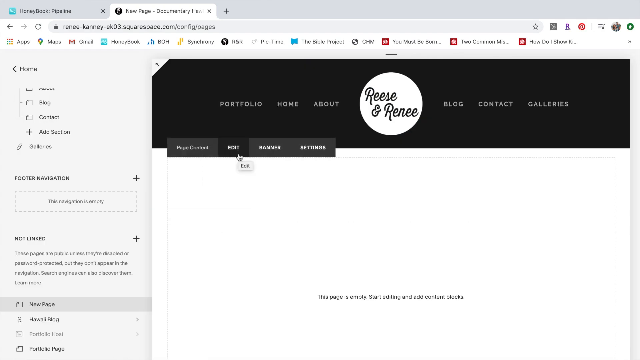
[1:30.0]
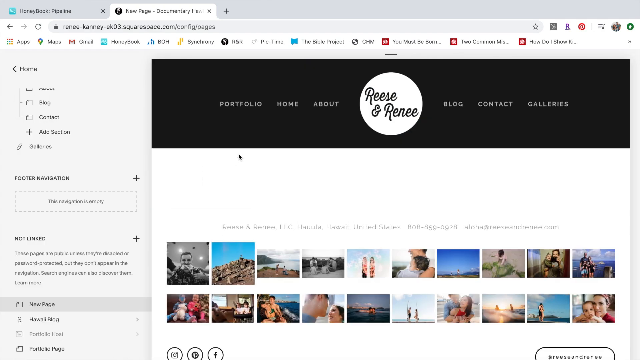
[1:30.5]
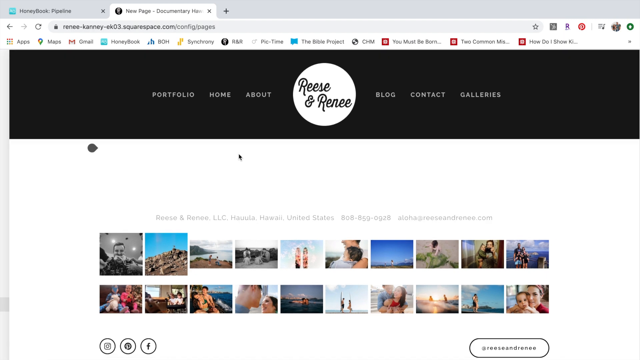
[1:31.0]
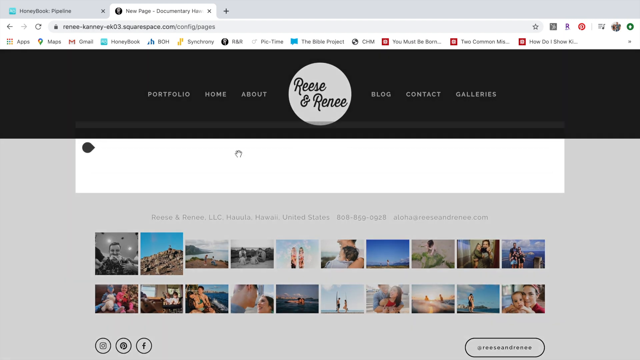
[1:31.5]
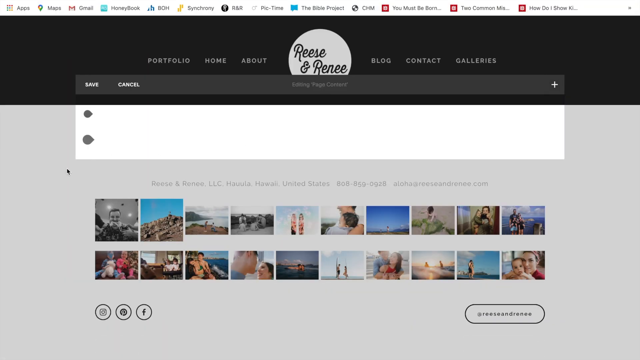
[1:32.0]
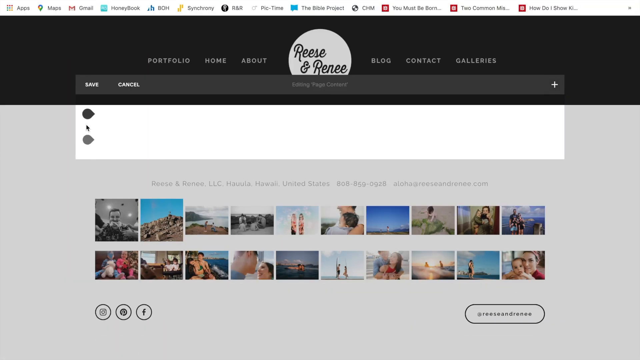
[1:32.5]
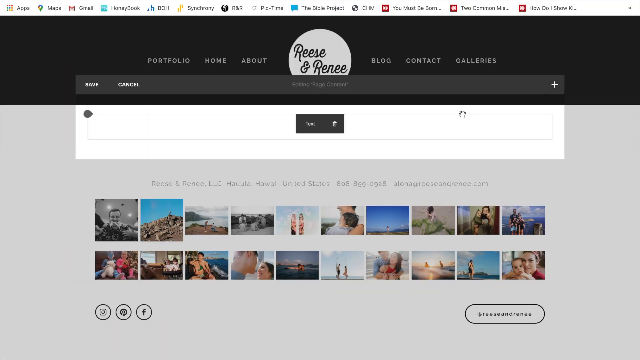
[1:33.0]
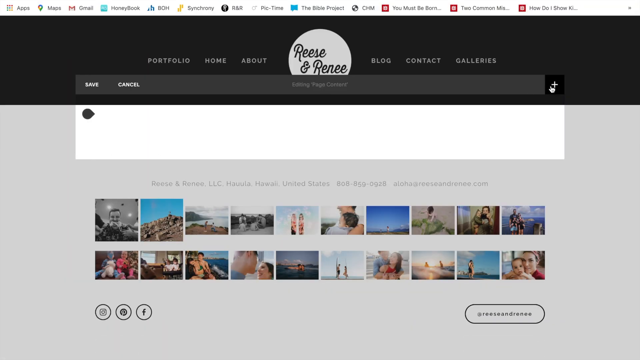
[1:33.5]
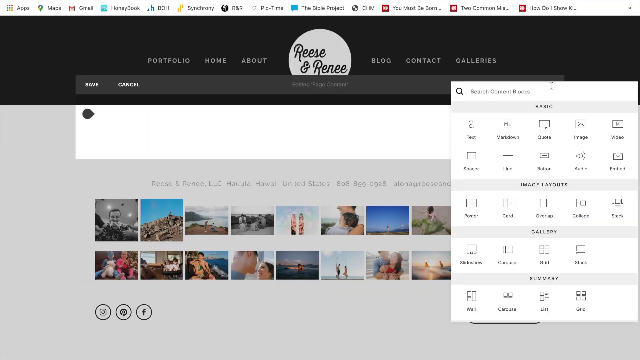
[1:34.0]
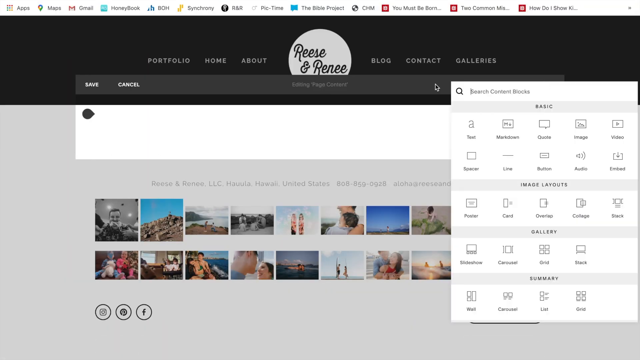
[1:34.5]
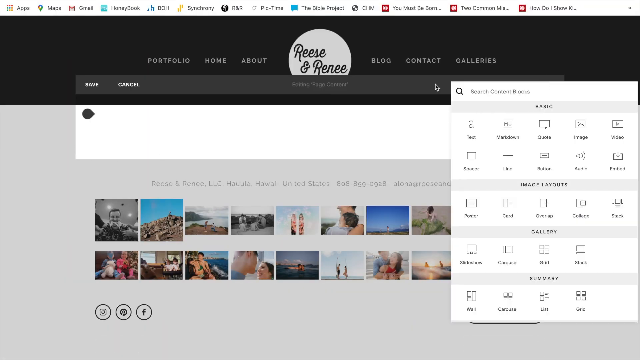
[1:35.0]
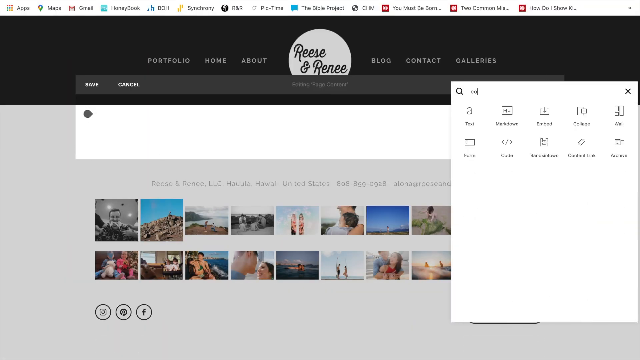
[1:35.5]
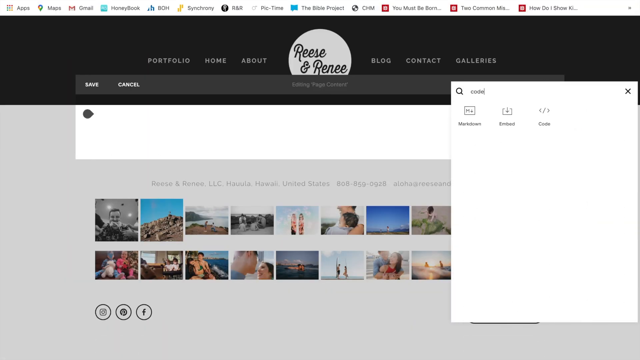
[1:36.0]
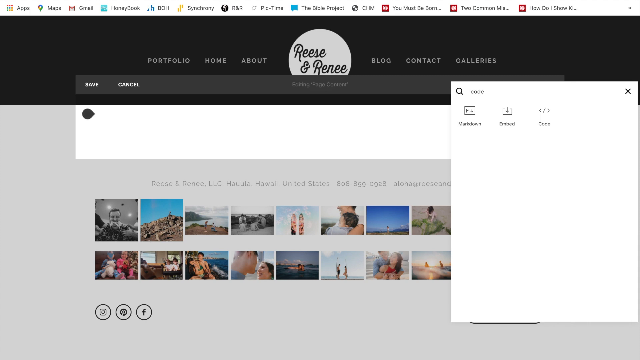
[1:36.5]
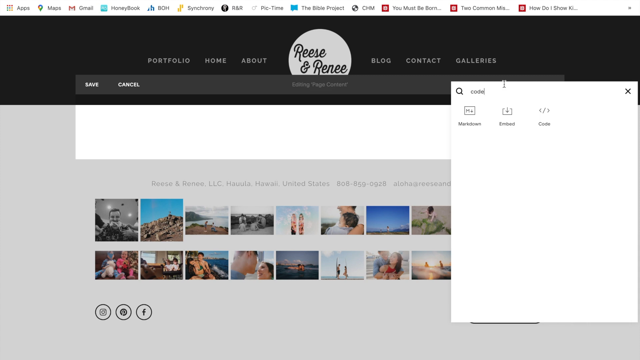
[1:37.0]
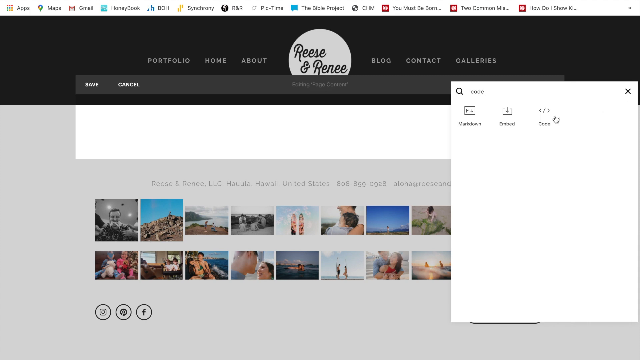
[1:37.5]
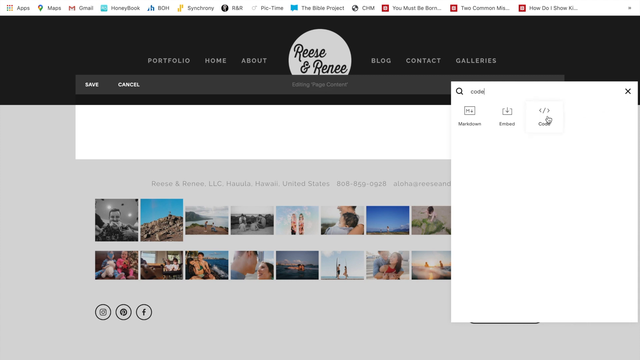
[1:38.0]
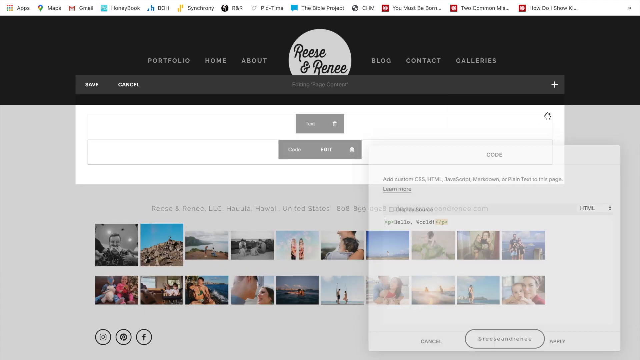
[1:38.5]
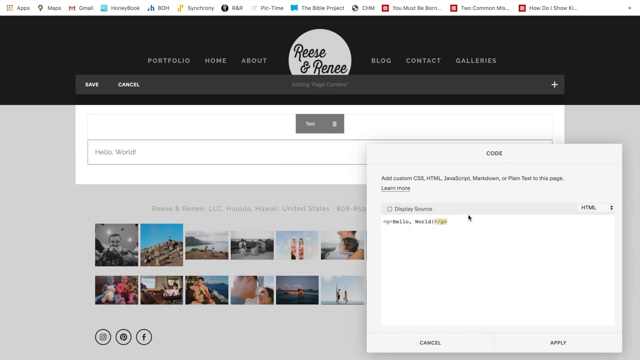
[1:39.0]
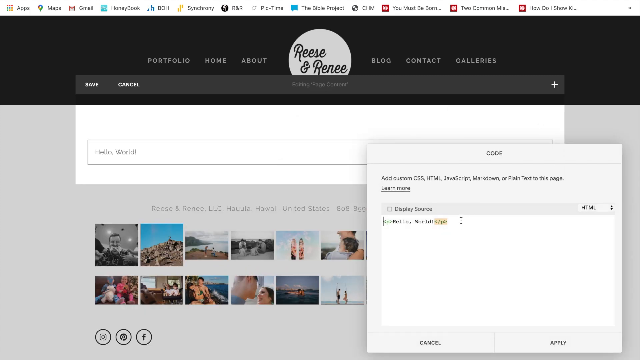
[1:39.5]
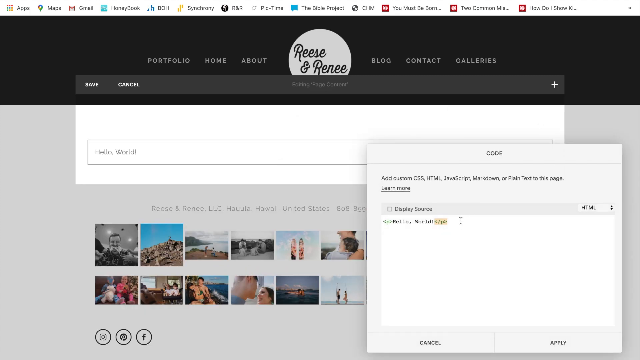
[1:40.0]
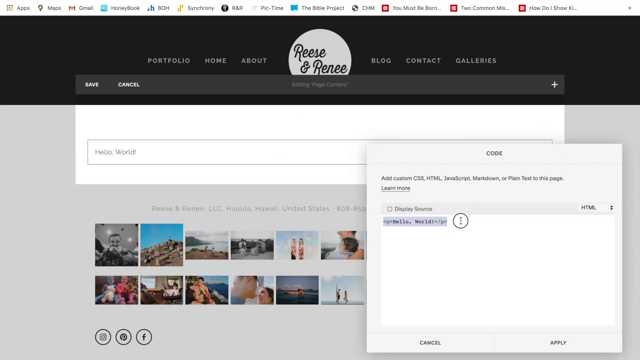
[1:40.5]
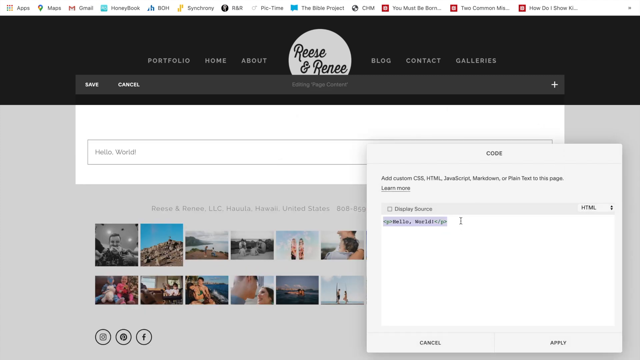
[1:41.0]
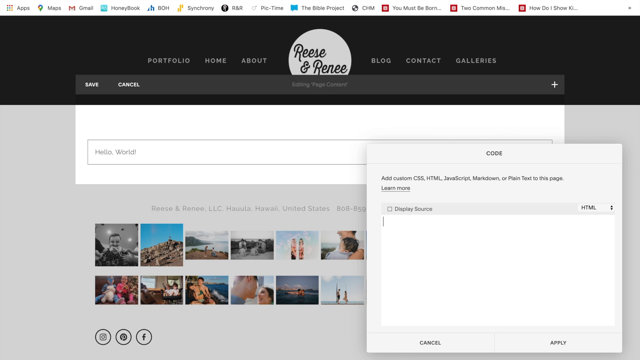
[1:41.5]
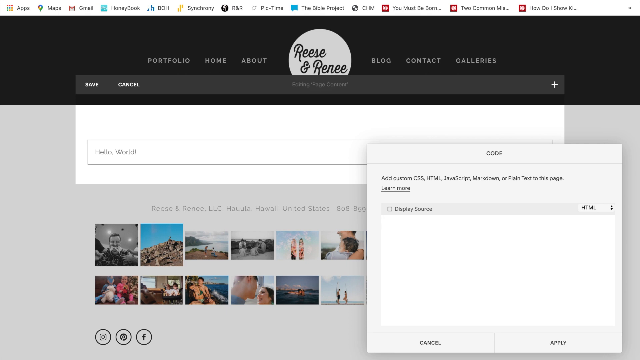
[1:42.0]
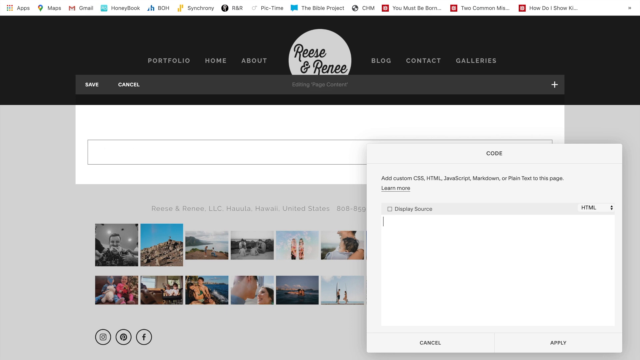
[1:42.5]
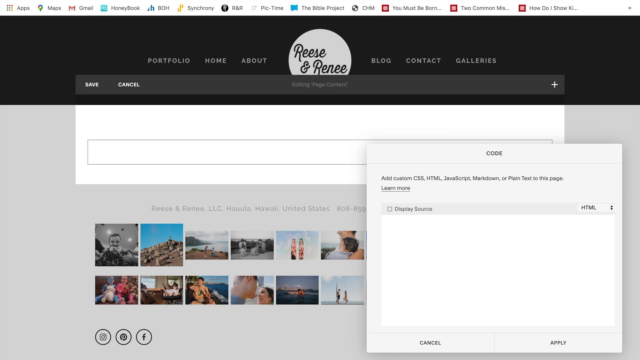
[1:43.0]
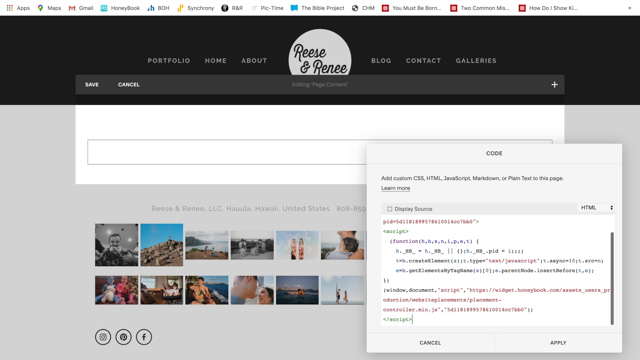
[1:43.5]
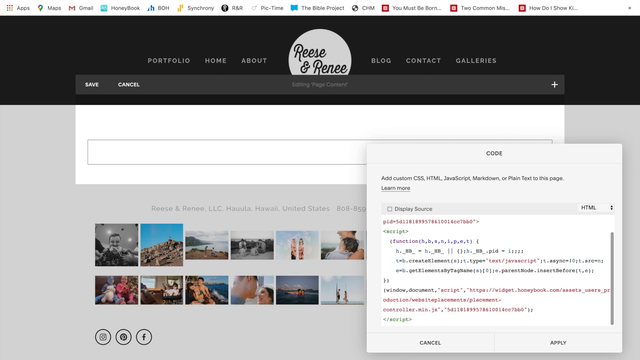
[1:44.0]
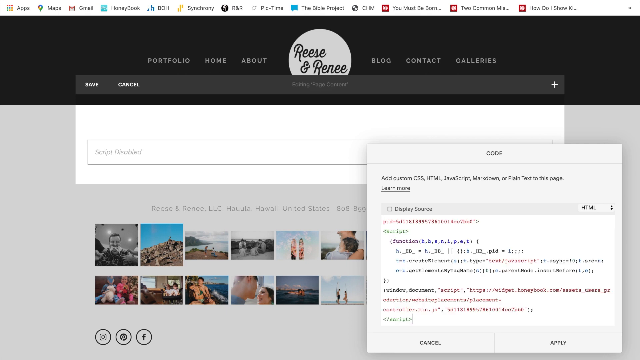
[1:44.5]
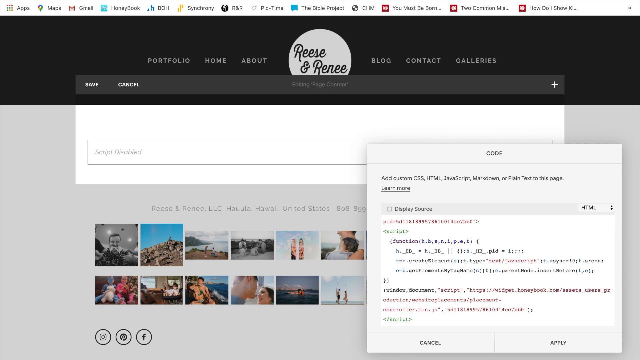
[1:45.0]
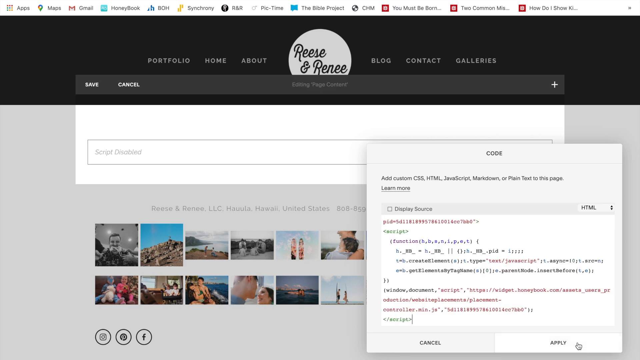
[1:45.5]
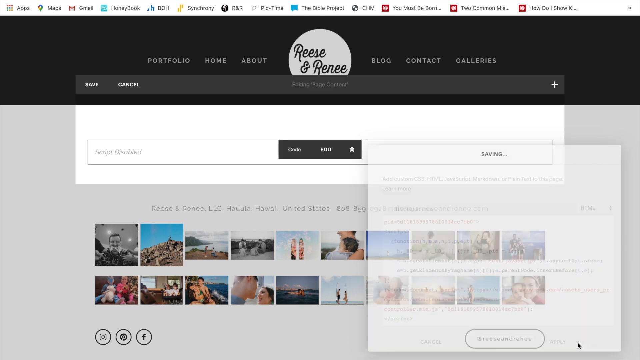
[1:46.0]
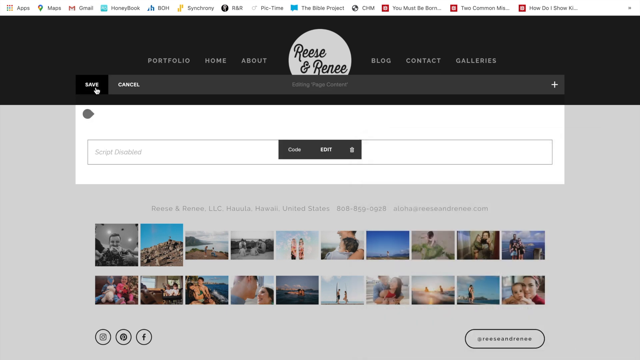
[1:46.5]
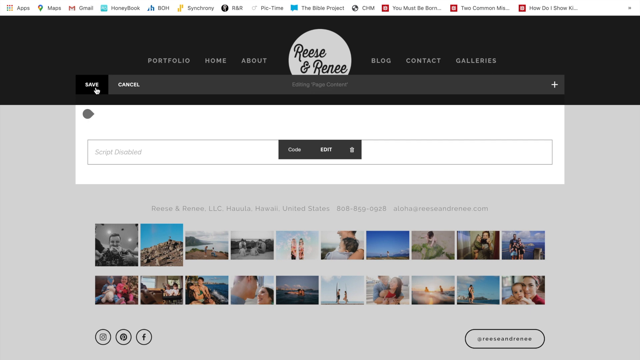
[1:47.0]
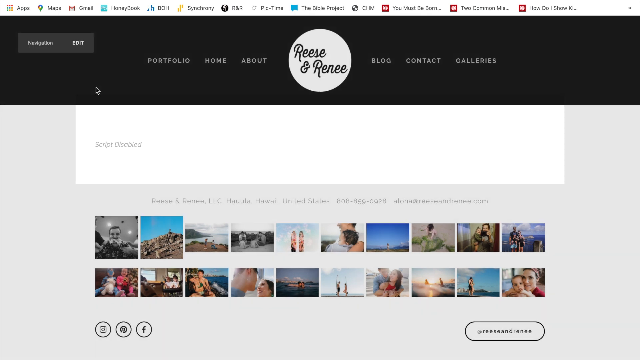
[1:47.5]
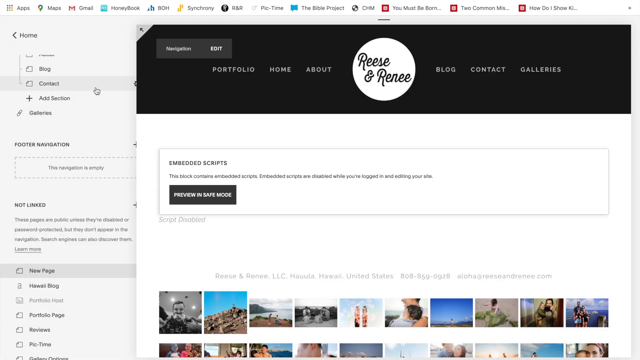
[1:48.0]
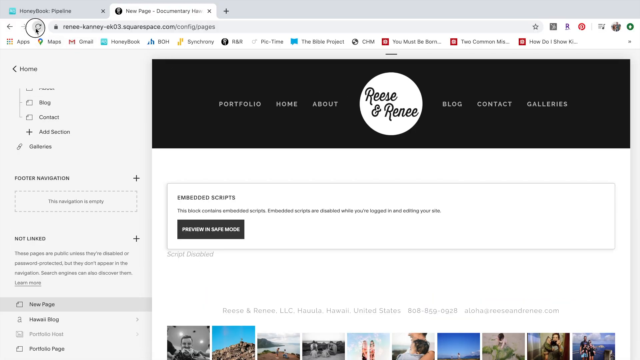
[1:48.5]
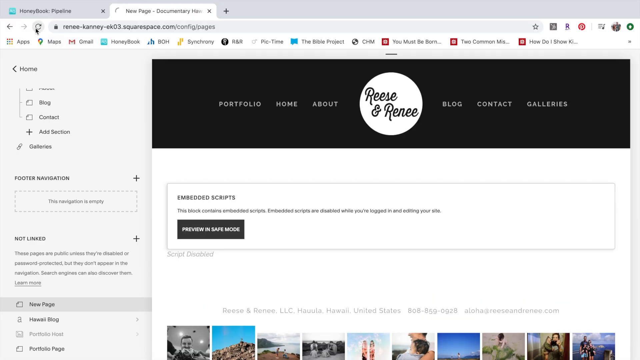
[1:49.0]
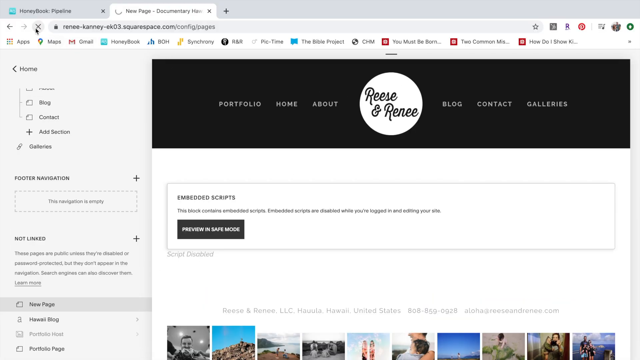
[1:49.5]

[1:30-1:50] An internet browser is open with two tabs, and the second tab is displayed: a Squarespace web page in development. The user is on a new page and selects an option to edit the page contents, which produces an empty horizontal white box. Using a plus button, they bring up a menu of different objects that can be inserted into the empty page, search for the word code and select the code option. A small pop-up appears for entering free-text code; the user deletes the placeholder text and pastes in some new HTML code. They press the save button, the page reloads, and it now shows an embedded script notification.